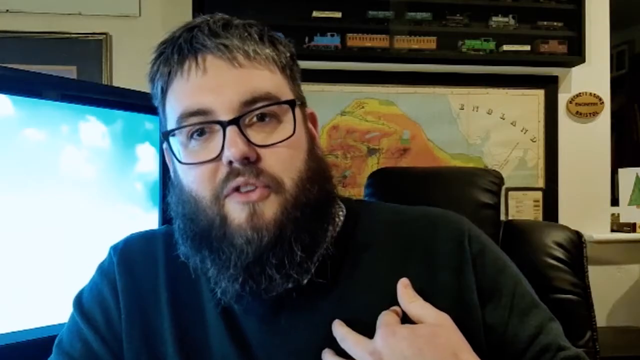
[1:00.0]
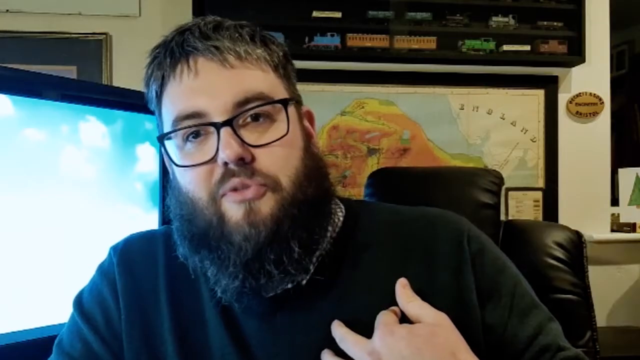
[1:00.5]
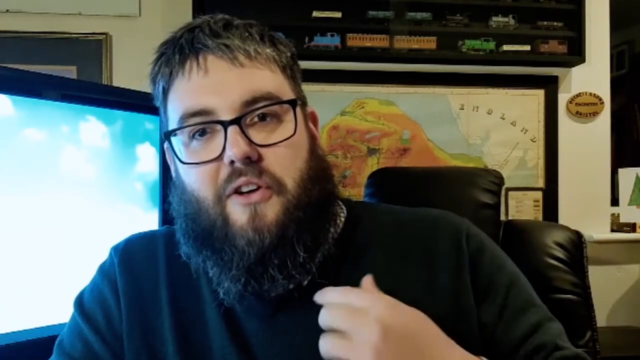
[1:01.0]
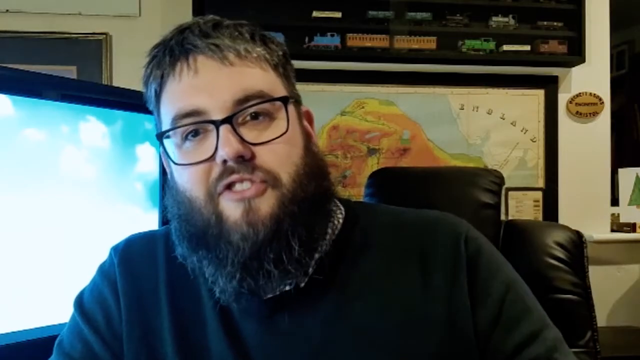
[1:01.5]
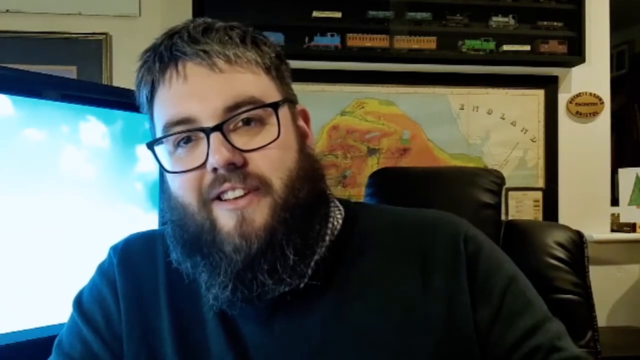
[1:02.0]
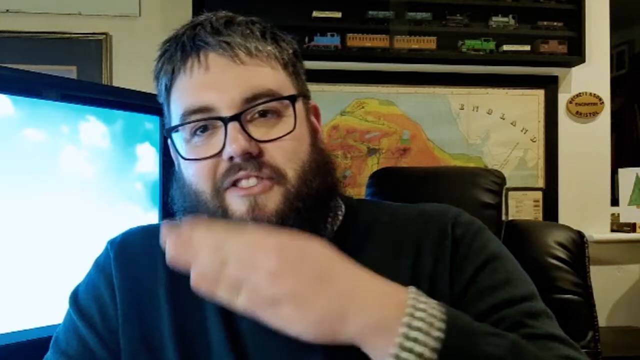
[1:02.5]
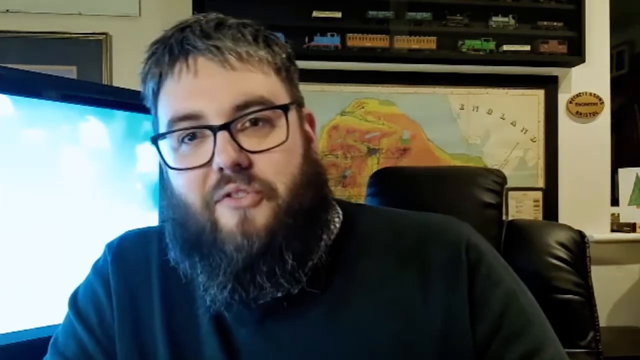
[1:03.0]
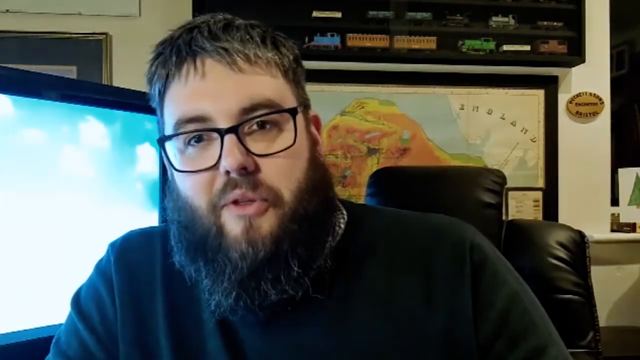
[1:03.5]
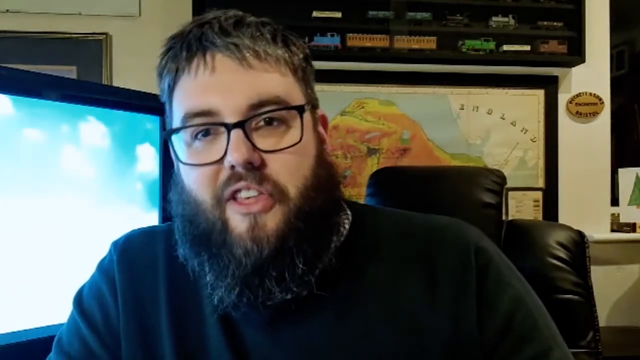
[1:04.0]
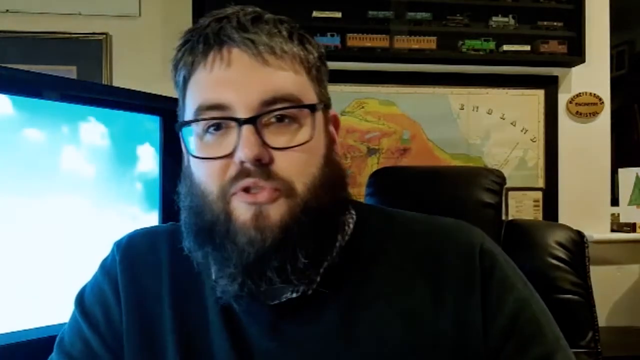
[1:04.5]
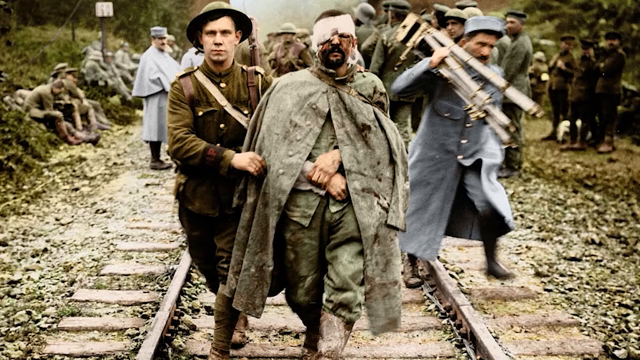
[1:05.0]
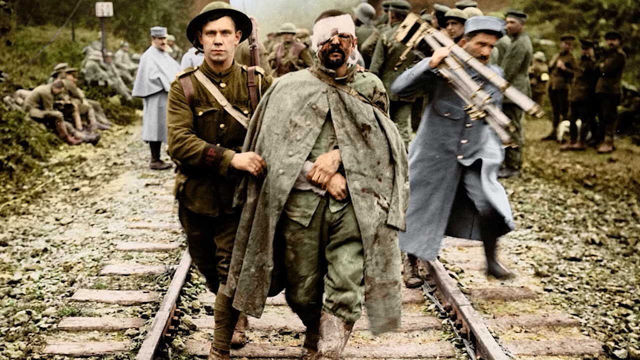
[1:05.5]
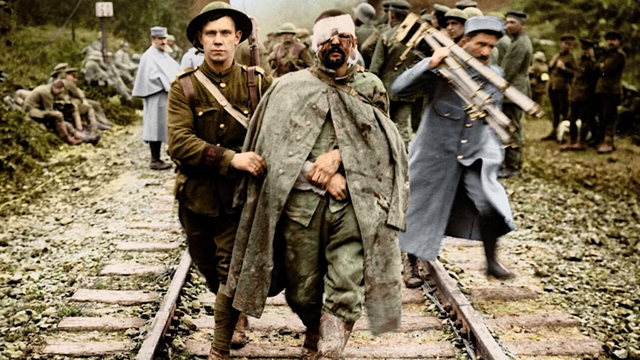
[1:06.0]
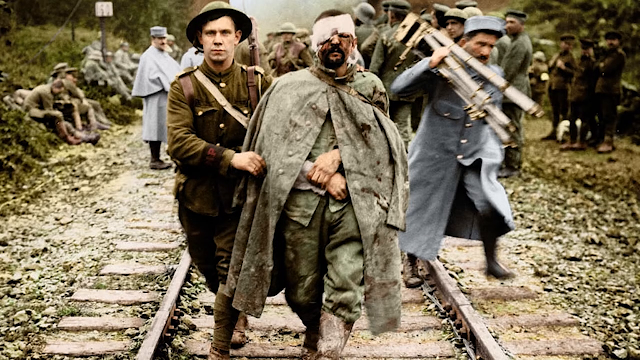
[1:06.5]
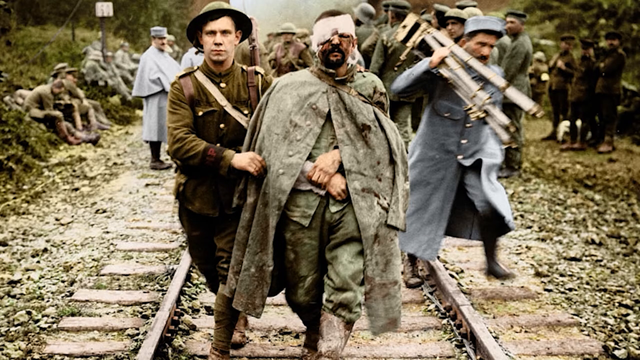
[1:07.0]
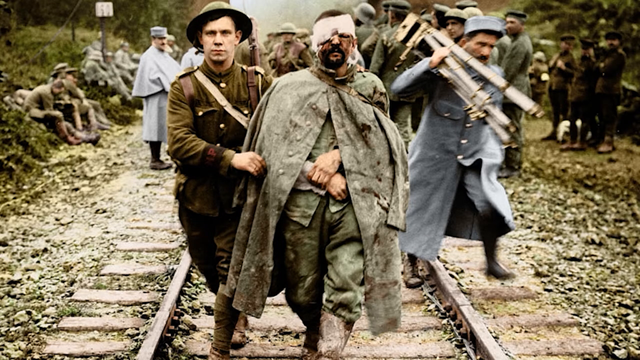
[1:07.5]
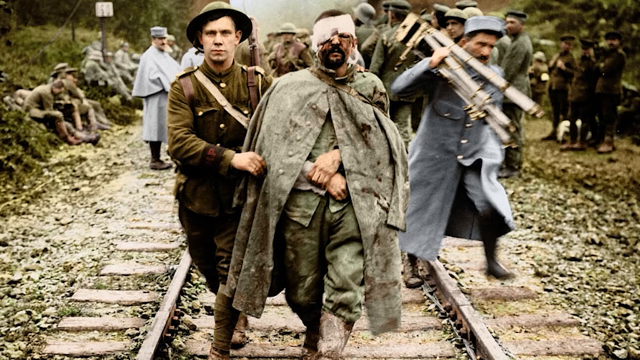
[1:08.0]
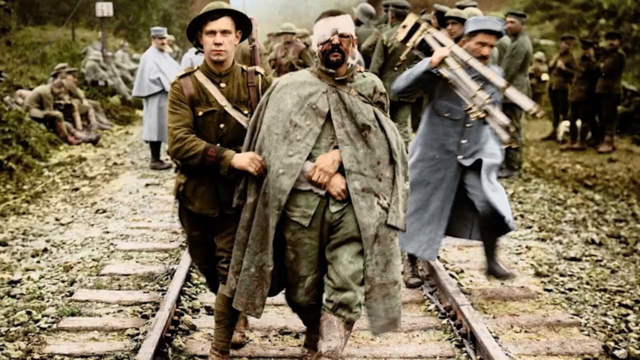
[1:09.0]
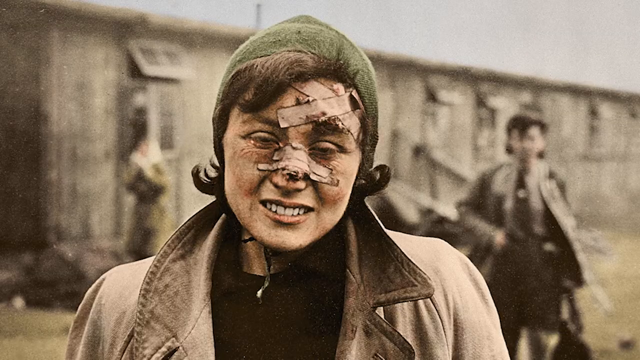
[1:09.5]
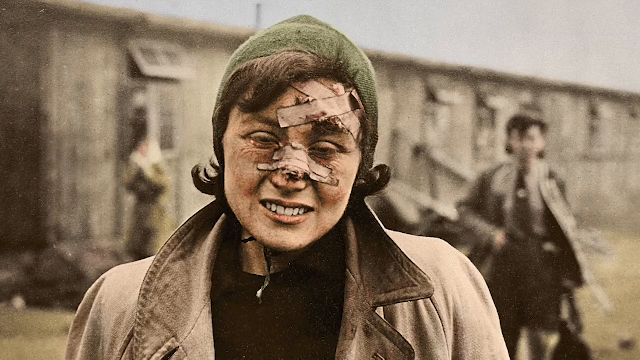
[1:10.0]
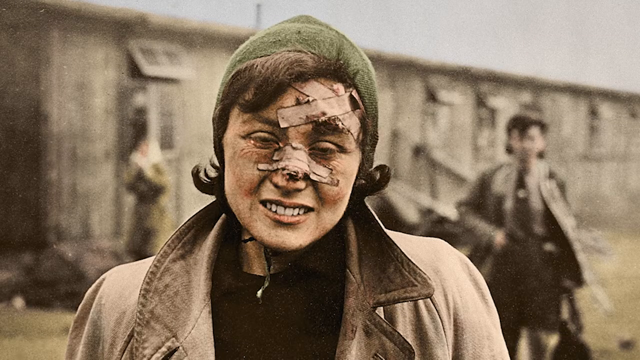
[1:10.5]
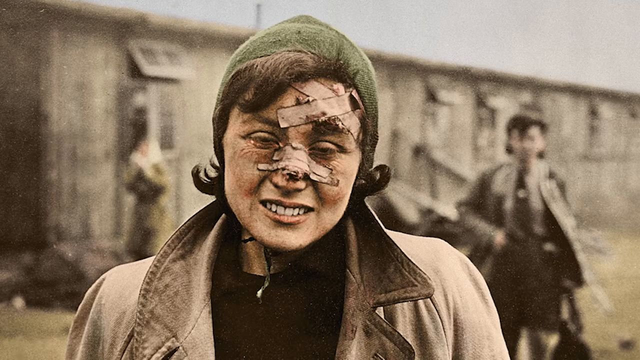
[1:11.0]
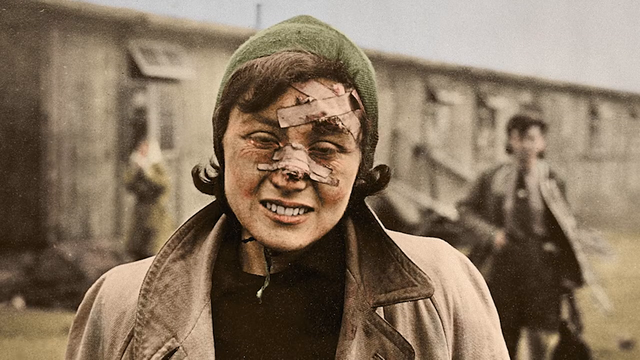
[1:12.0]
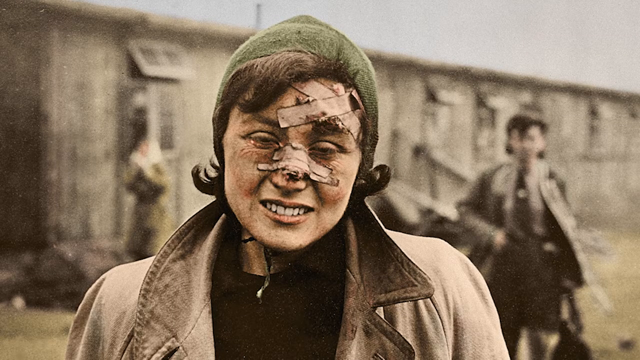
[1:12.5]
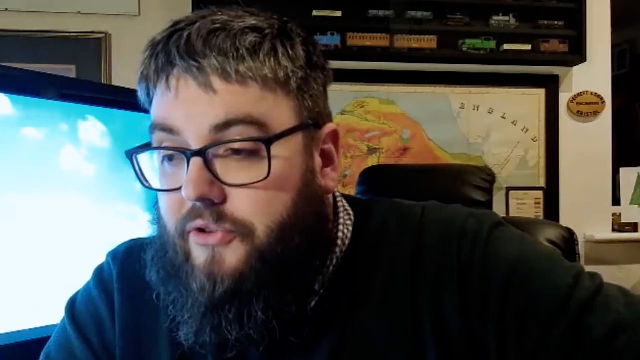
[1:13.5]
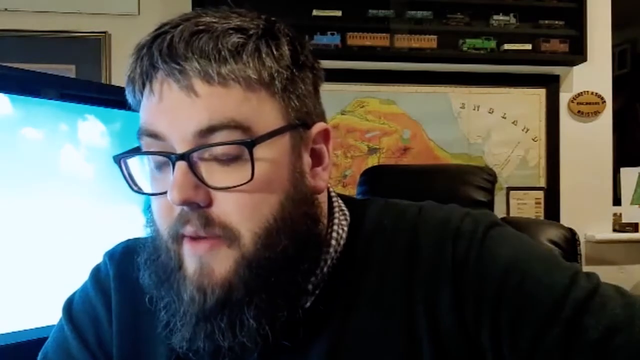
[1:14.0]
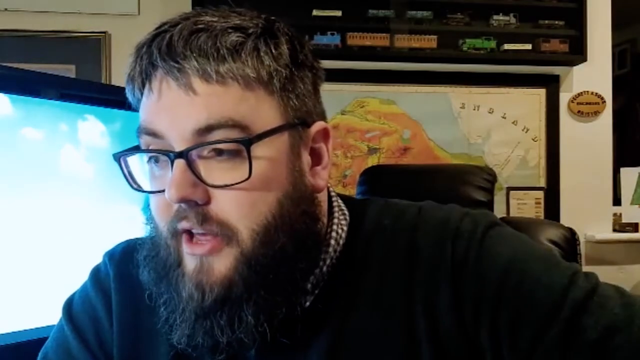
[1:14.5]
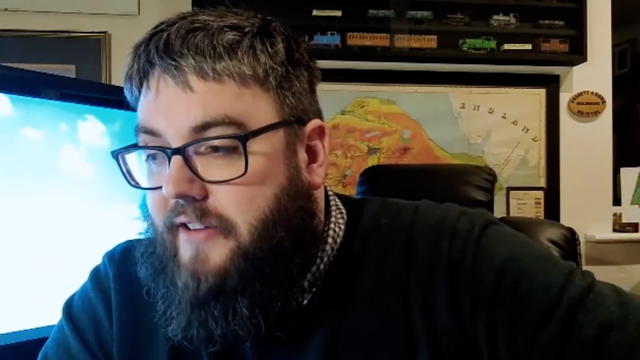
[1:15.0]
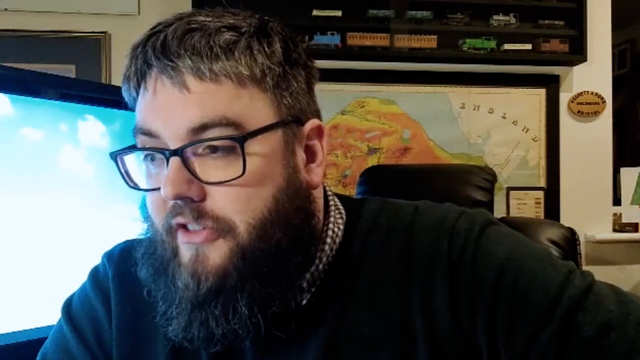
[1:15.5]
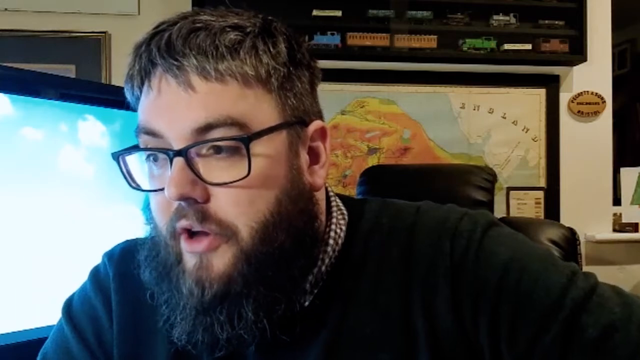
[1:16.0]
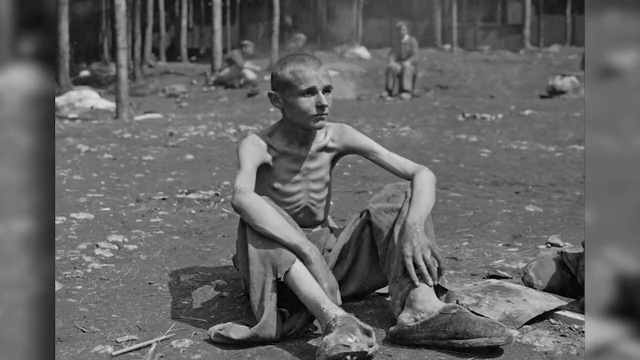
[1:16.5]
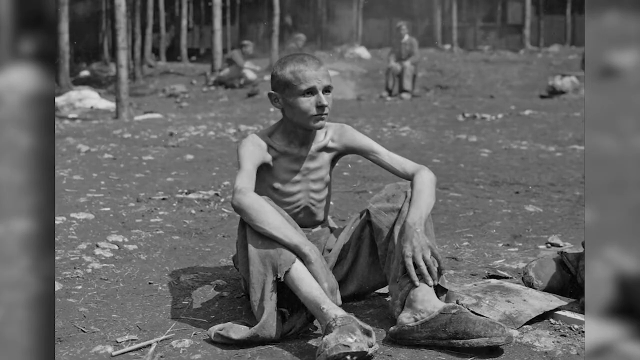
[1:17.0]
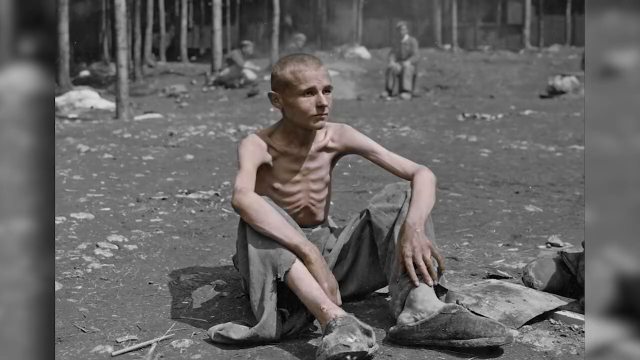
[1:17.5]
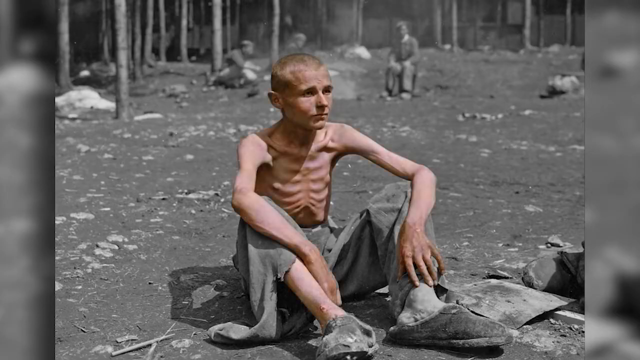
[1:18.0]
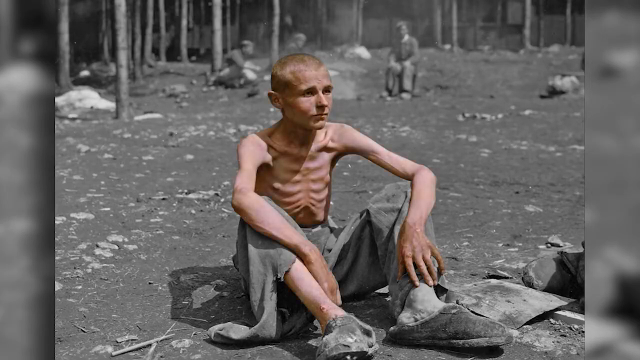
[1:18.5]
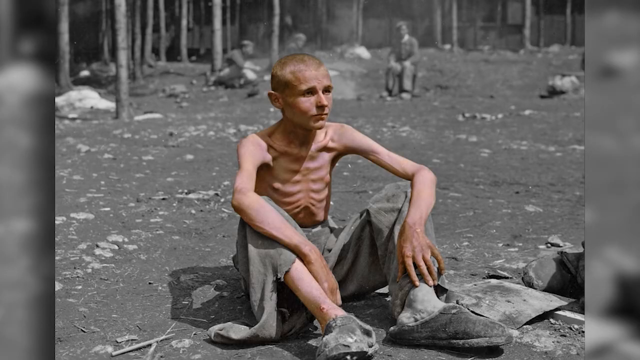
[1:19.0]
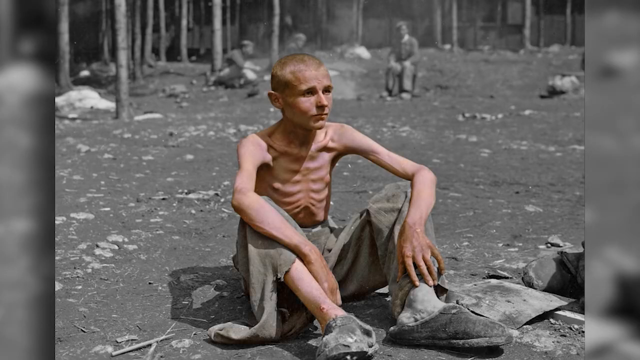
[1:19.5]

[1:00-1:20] The man with the beard, glasses and short hair speaks to the camera with the computer screen to his right. A picture of railroad tracks follows, with people walking on the track. A soldier is possibly helping somebody who may have been injured in a bombing or some sort of accident. Other people are to the right and left of the tracks, some sitting down and some standing up. Next, an injured woman with lots of bandages is kind of smiling, and a woman or somebody behind her wears a jacket or coat; the skies are gray. The video returns to the man in the black sweater, black-rimmed glasses and beard, inside what might be his office, with railroad trains on a shelf behind him and the computer screen to his right. Then a picture shows an emaciated, almost anorexic person with short hair, a bunch of trees that look stripped down, and somebody behind him. The picture fades a little into color, with him more in color while everybody else stays in black and white. The video returns to the bearded man with glasses speaking to the camera.